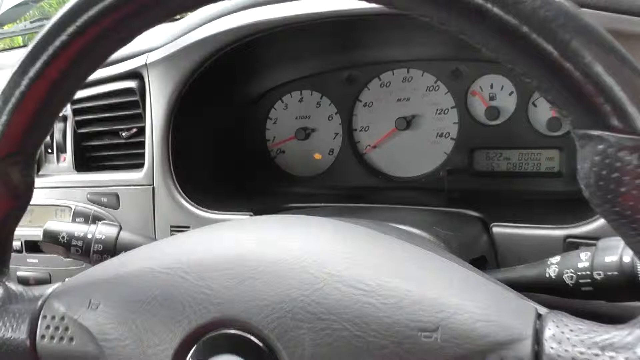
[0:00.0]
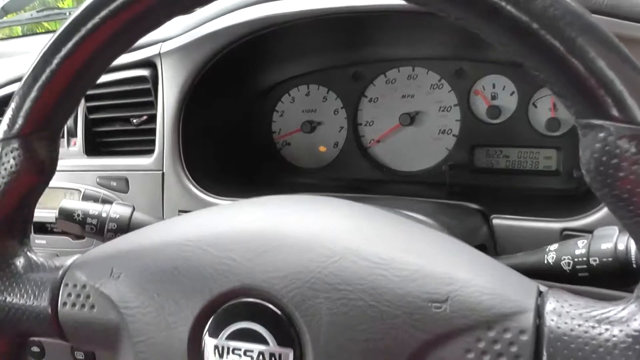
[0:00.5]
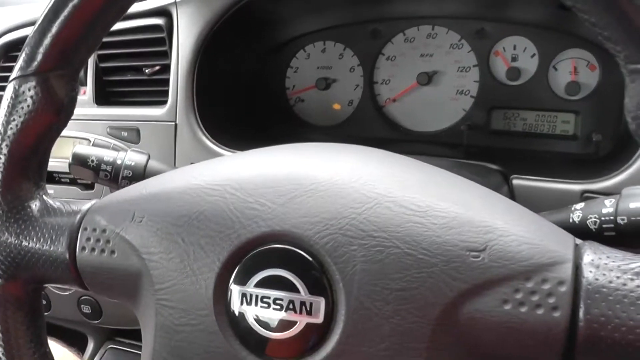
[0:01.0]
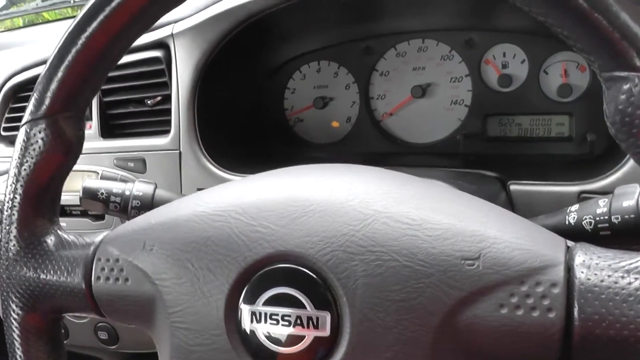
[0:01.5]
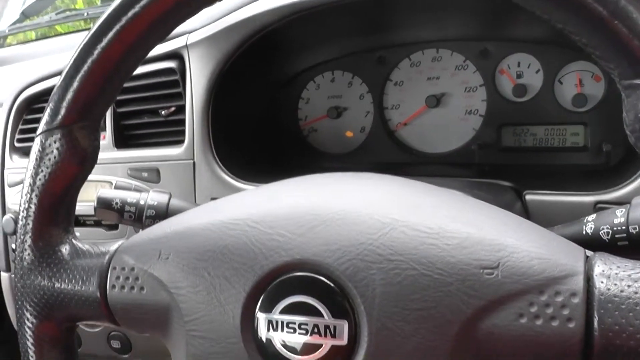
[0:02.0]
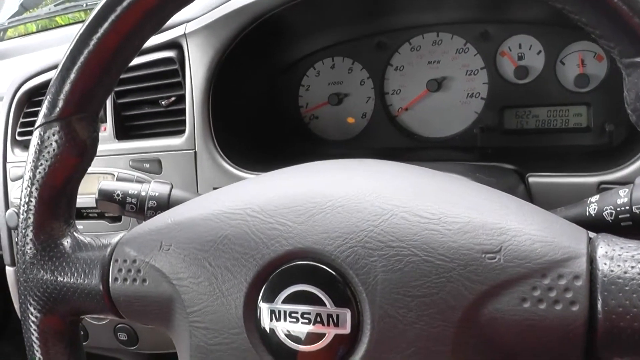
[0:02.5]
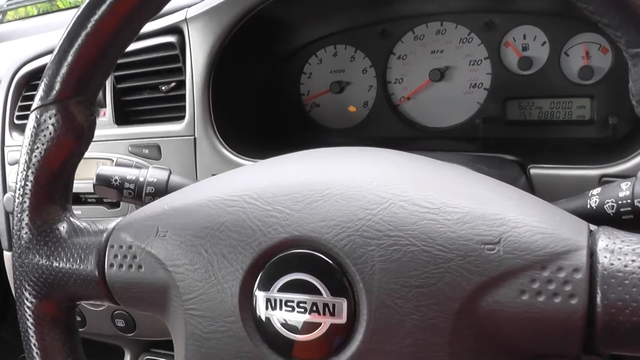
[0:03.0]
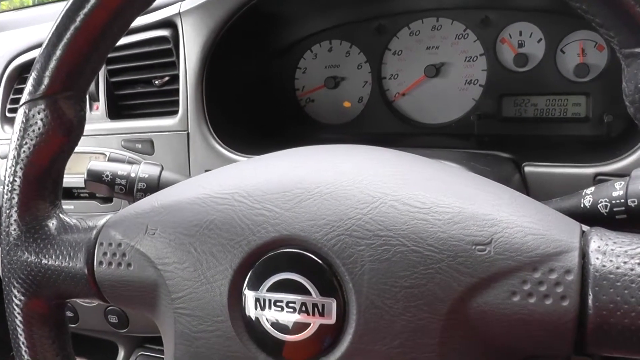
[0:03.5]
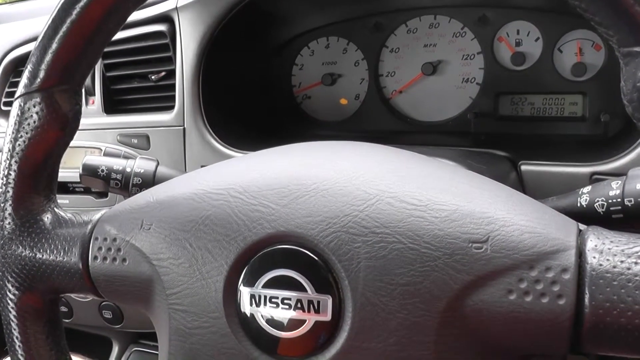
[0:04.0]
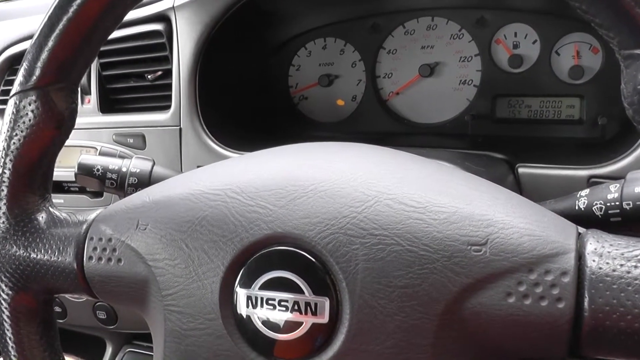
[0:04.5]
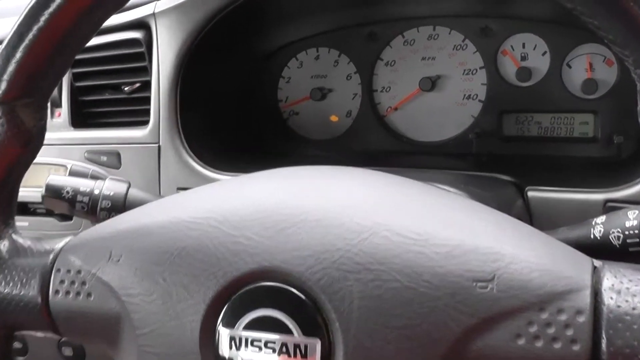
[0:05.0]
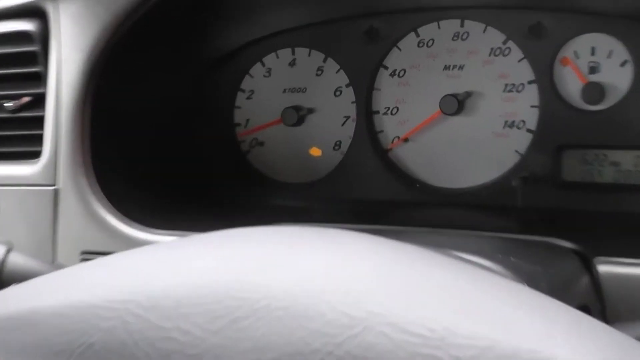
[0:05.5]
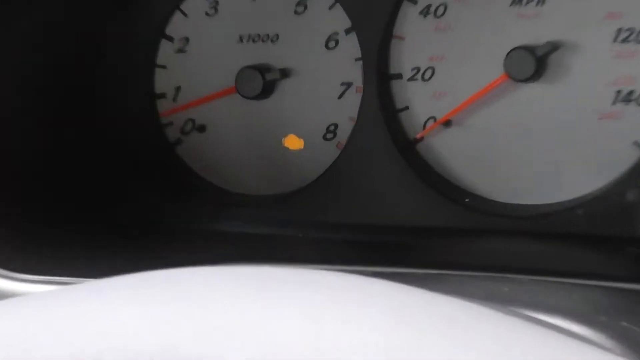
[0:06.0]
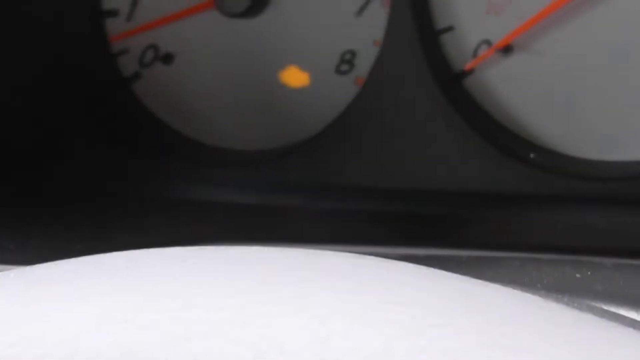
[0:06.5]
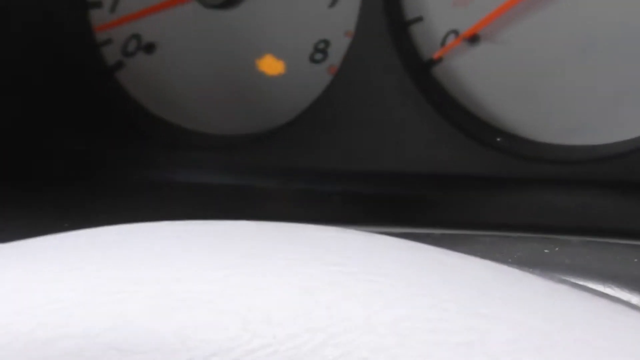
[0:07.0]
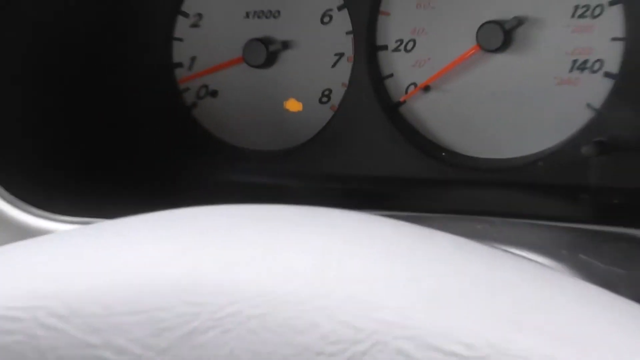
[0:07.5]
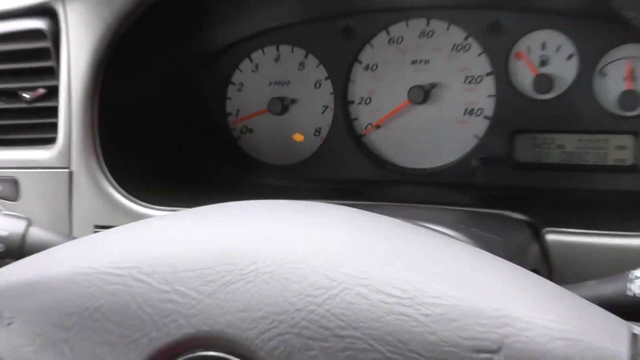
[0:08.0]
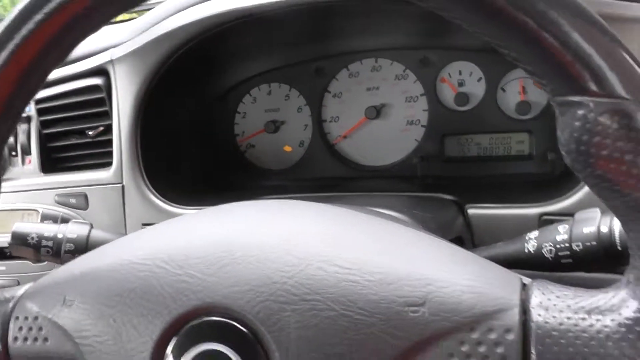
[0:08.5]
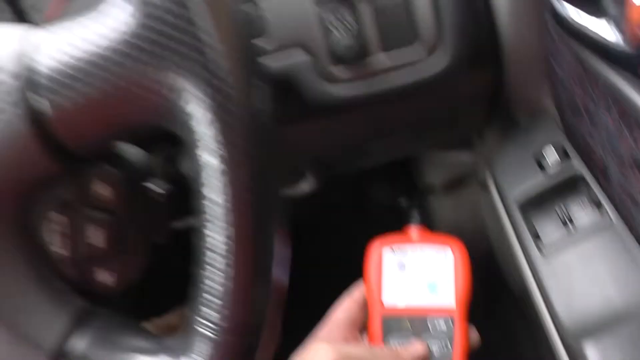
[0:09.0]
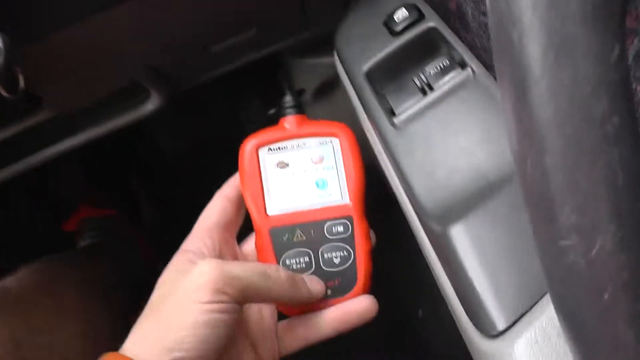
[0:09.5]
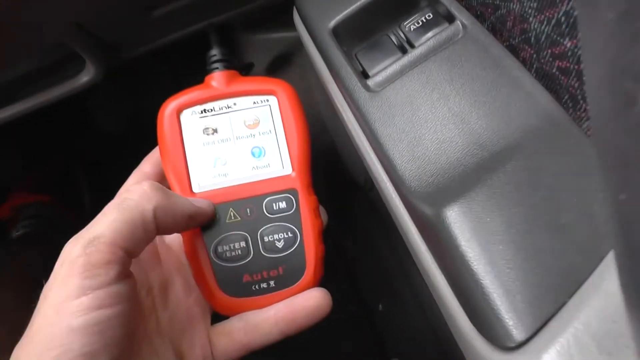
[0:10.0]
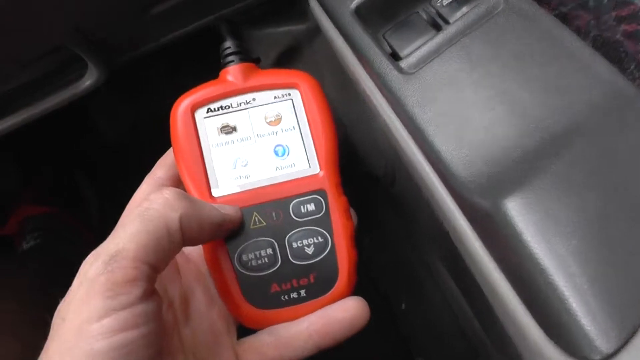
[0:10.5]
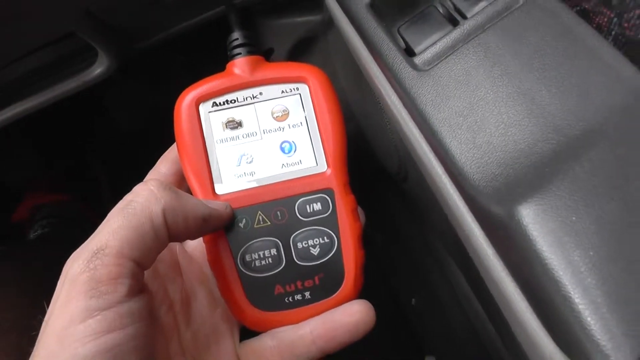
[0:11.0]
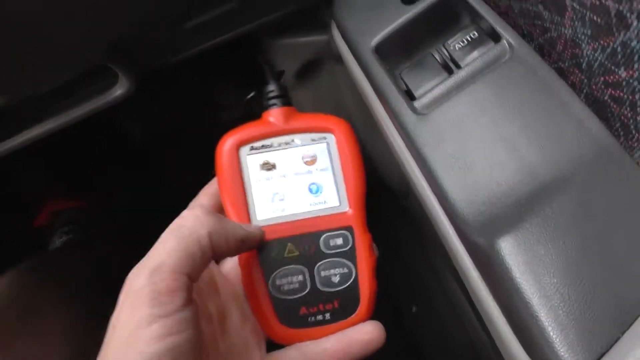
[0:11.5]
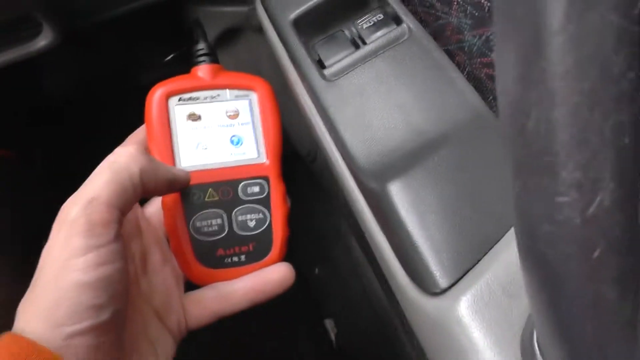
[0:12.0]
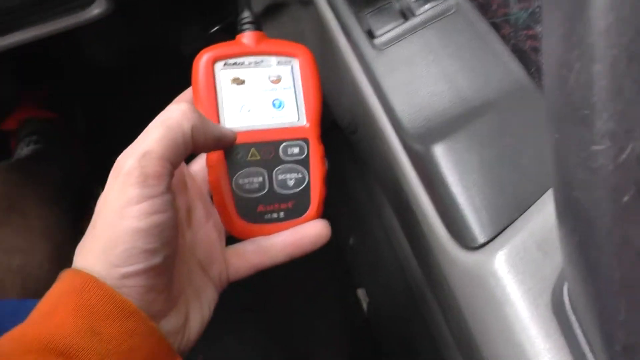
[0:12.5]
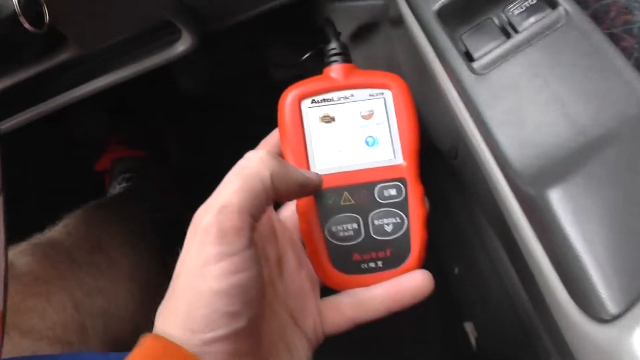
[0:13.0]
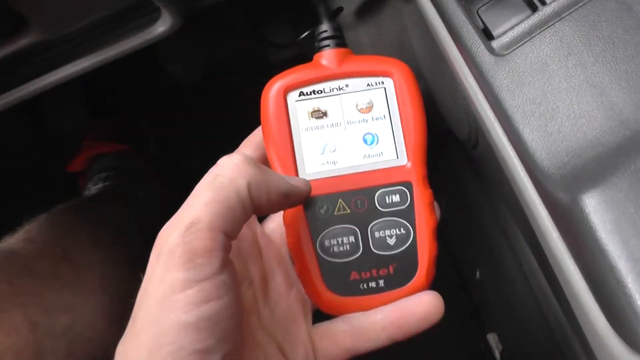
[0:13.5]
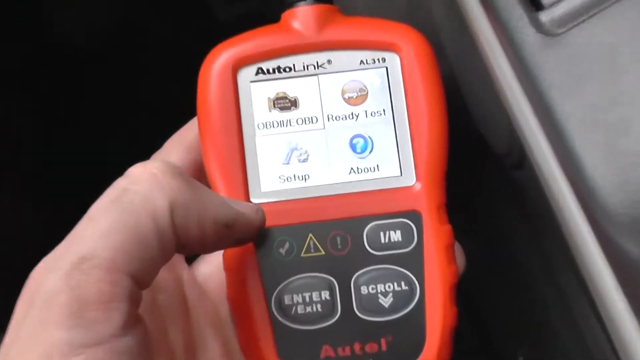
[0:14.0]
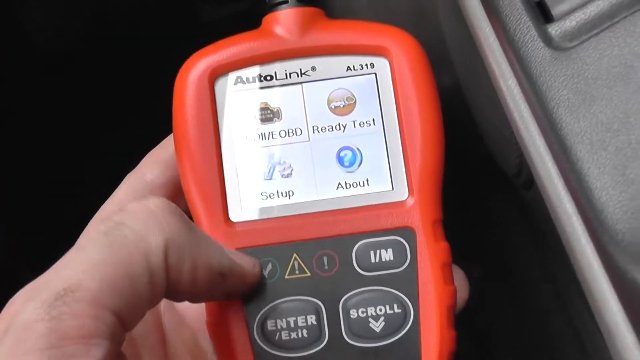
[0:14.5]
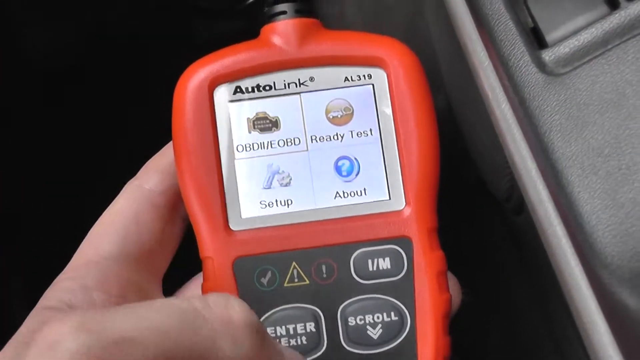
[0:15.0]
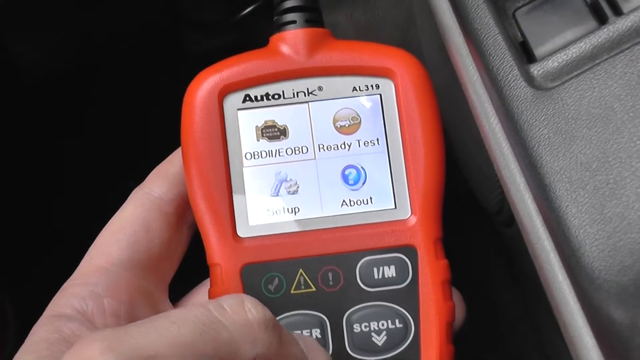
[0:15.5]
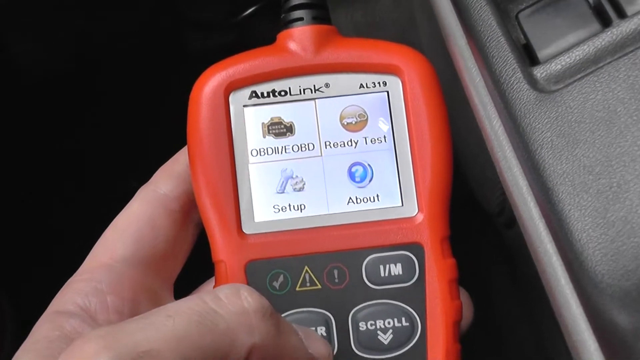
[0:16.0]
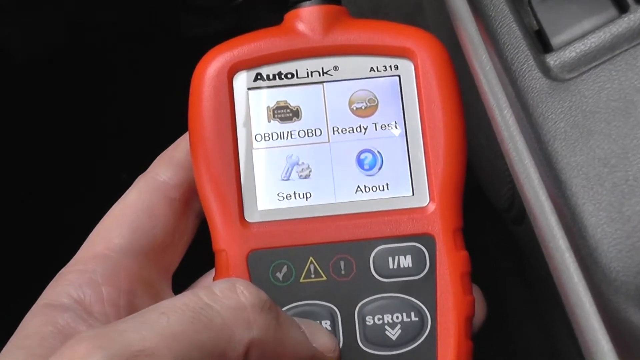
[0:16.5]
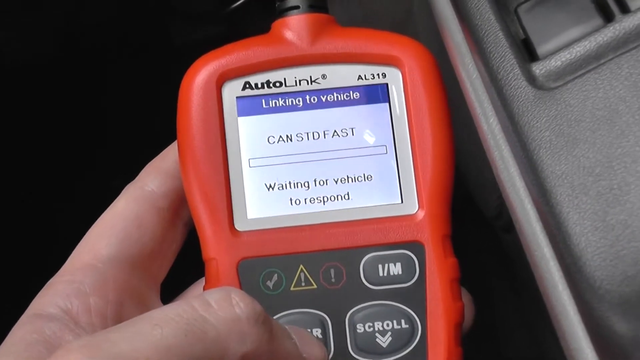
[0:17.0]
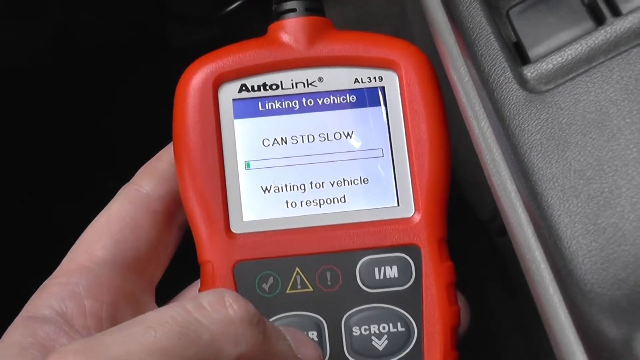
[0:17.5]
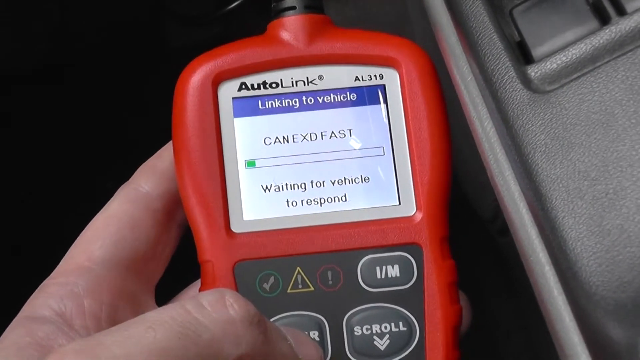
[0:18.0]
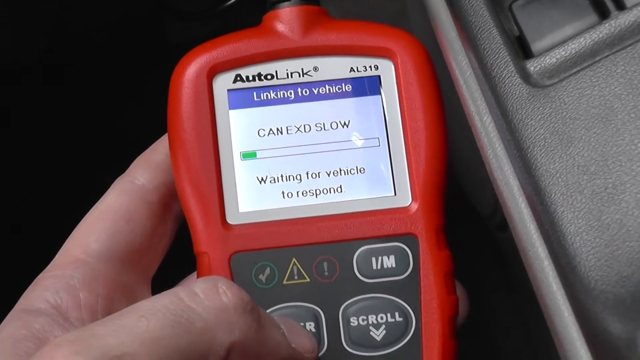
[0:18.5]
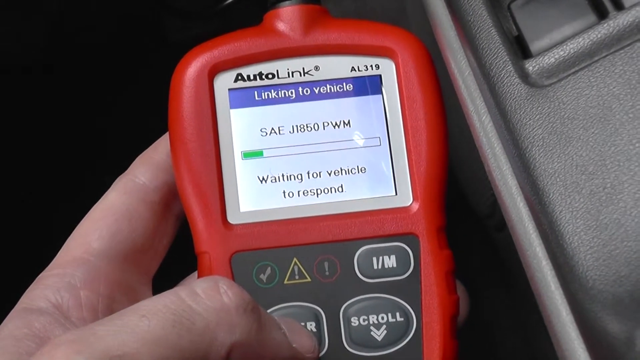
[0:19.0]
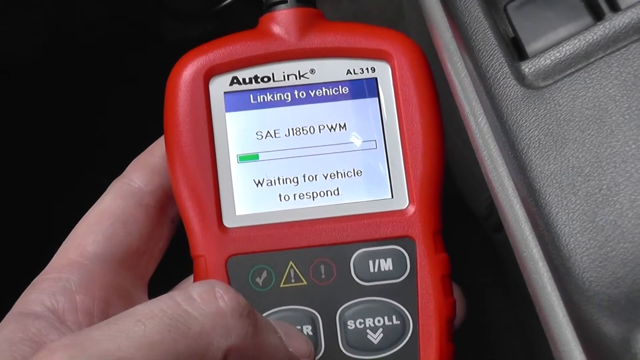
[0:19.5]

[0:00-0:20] The video opens on the vehicle's instrument cluster, seen from the driver's seat, with its gauges and indicators. The view moves down to show more of the steering wheel, then moves back up for a closer look at the instrument cluster. On the RPM panel there is a small yellow image of a motor, which indicates an issue with the car. The video zooms back out to show the mechanic holding a little red diagnostic handheld device in his left hand. The back of the device lies in his palm, and he uses his left thumb to operate it, pushing the buttons toward the bottom of the device. He moves his hand over while the camera zooms in and out, then touches a bottom button, and the device's screen changes.